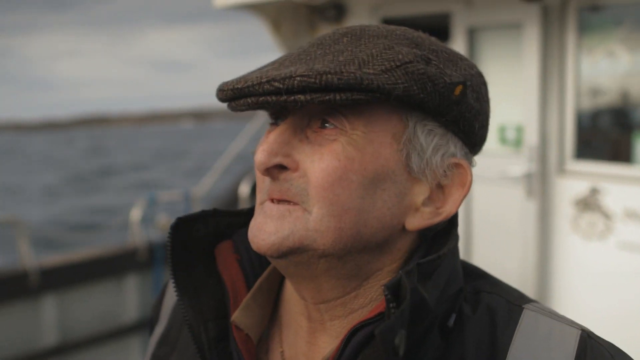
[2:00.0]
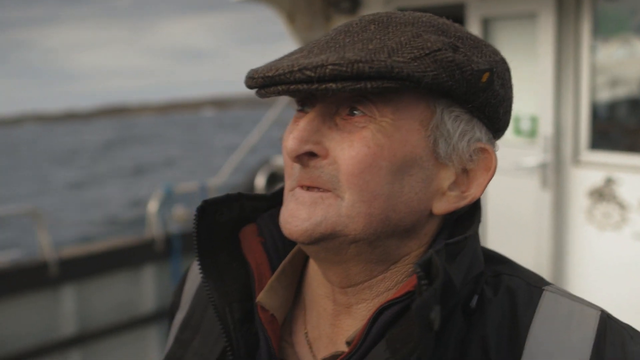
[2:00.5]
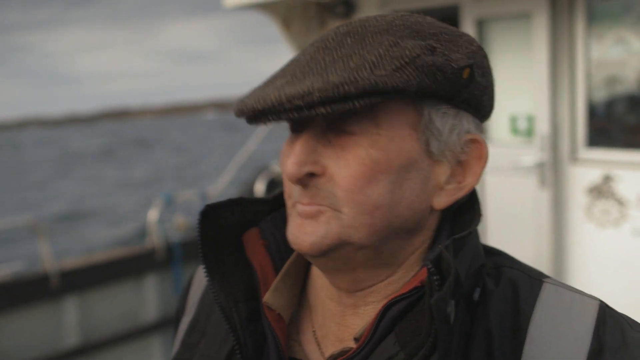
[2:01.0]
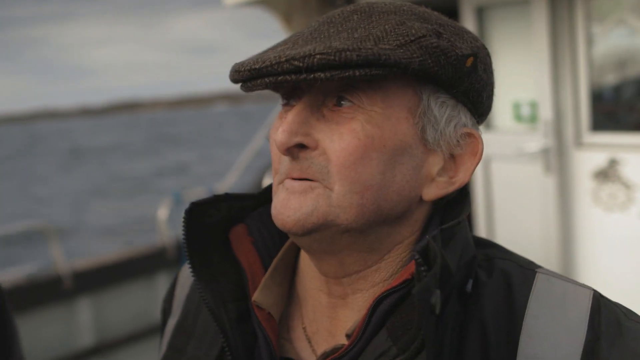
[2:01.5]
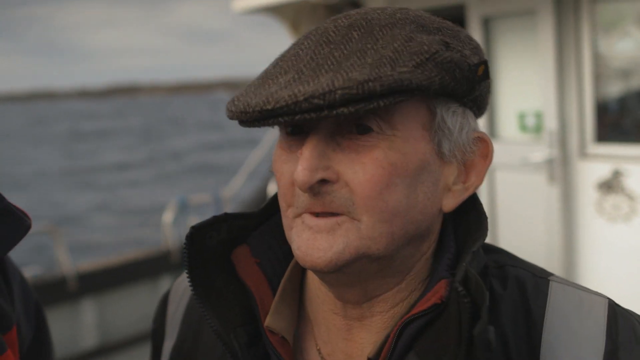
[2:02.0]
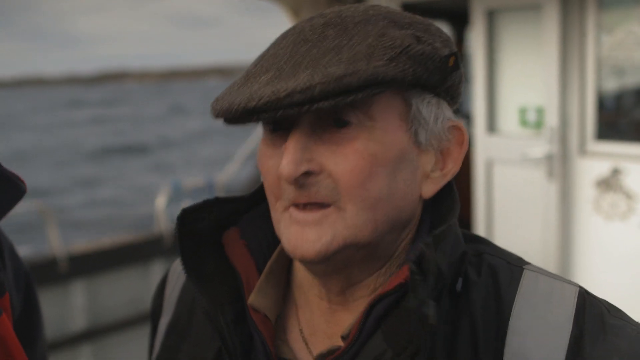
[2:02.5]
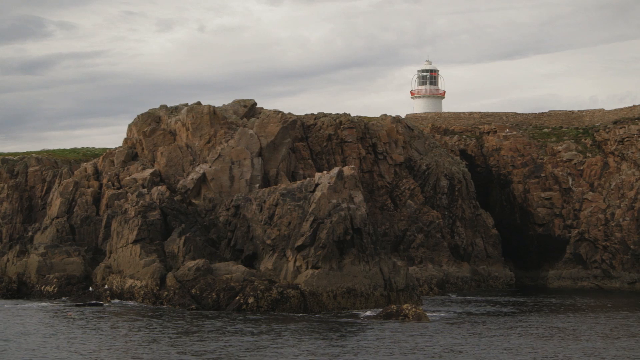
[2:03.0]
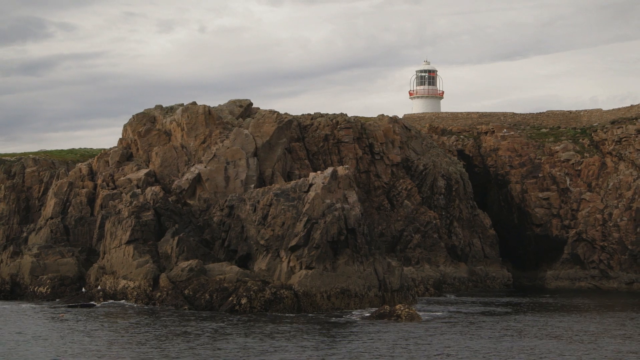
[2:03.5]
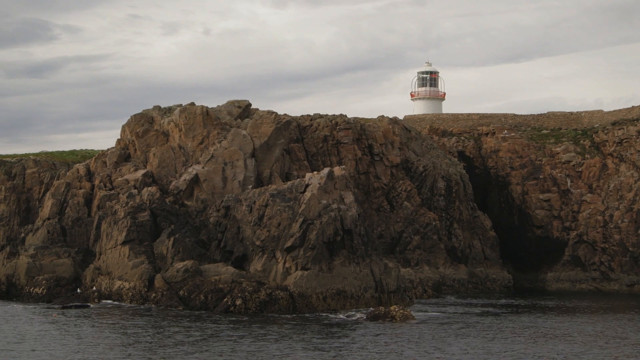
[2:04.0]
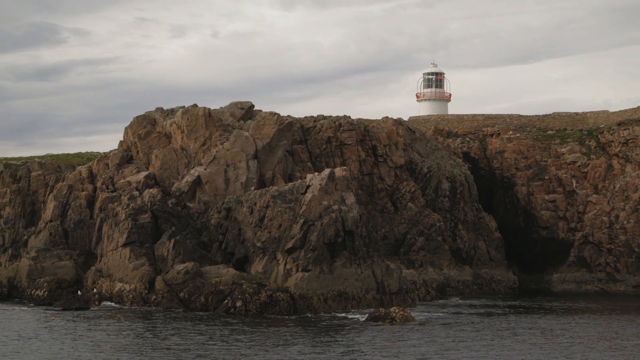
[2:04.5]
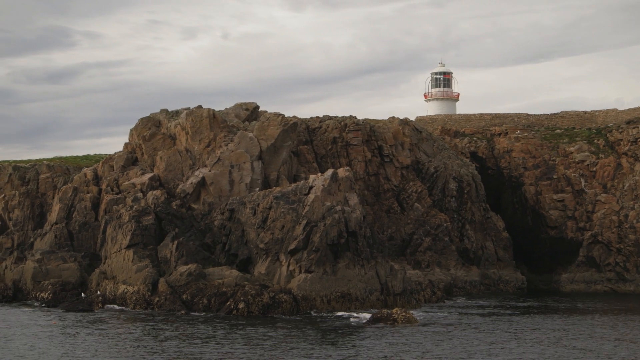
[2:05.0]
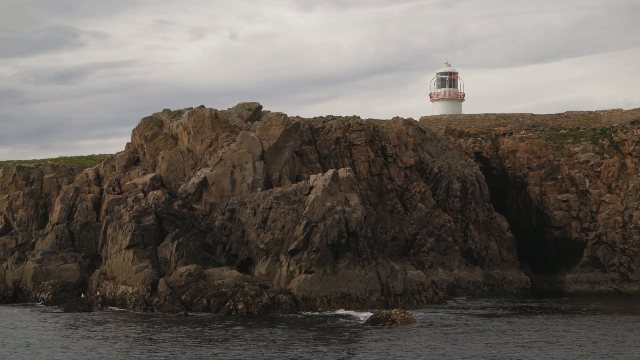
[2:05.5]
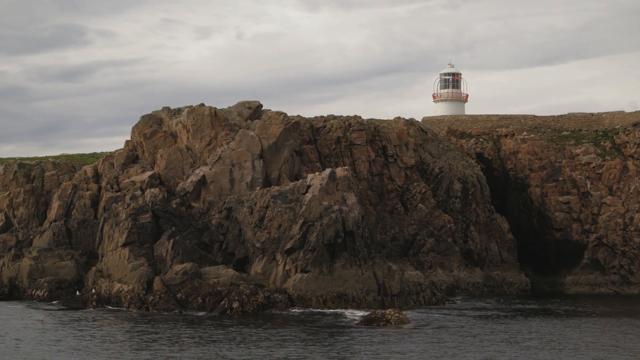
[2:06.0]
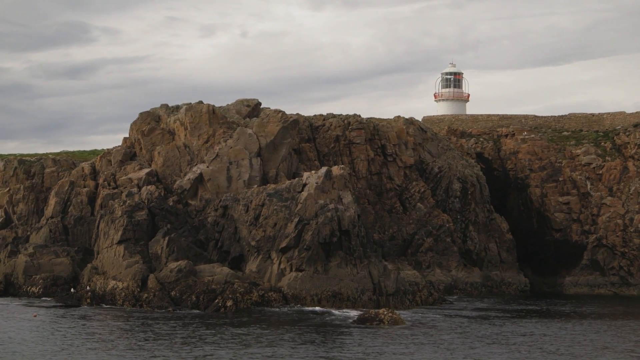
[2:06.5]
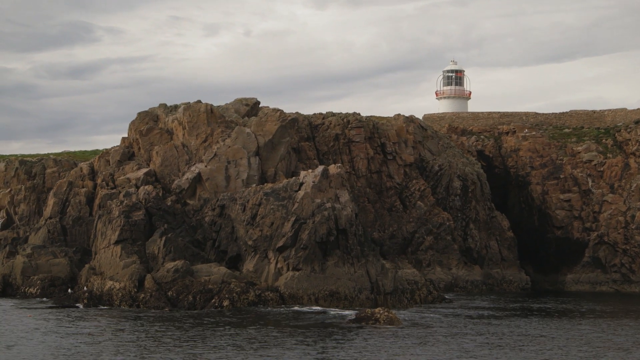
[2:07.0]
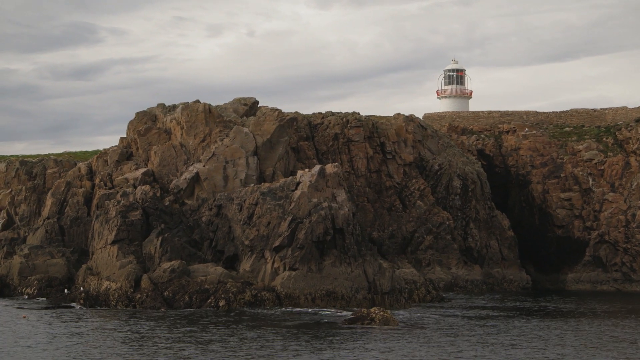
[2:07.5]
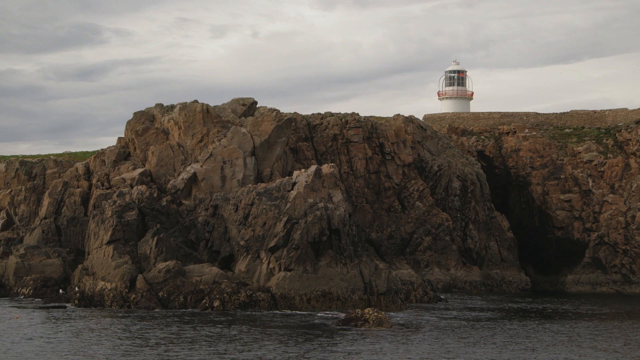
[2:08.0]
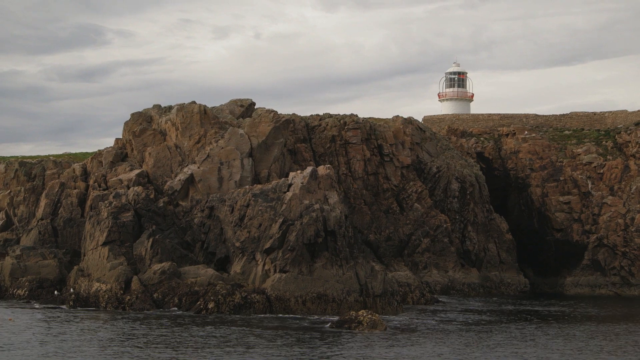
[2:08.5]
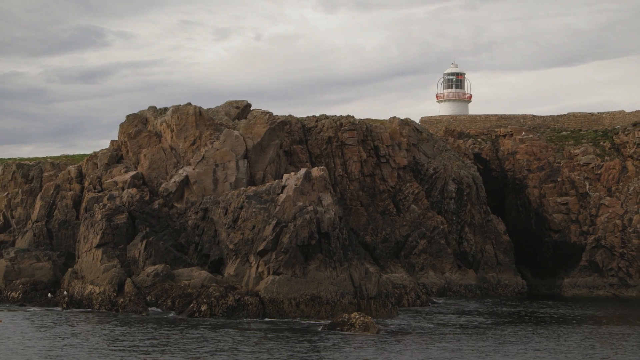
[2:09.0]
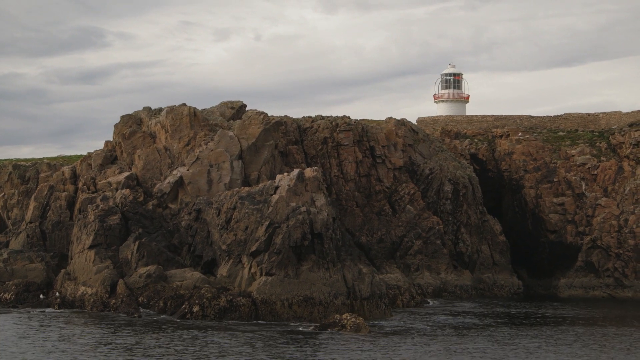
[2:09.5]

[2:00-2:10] The old man is sort of talking and nodding his head, and it looks like they are getting closer to the island plateau with the lighthouse.